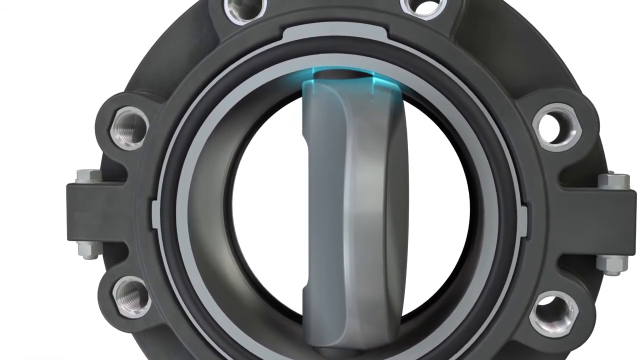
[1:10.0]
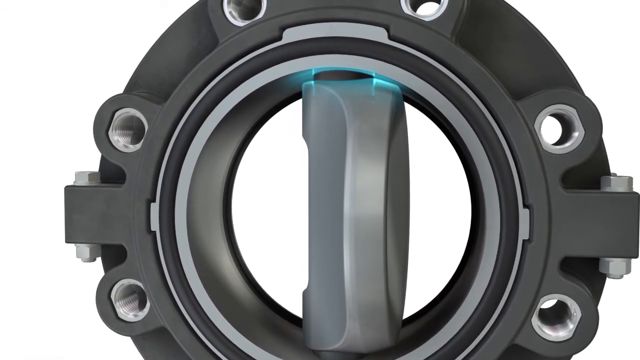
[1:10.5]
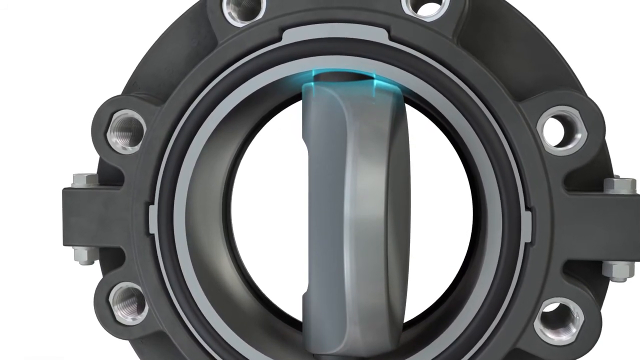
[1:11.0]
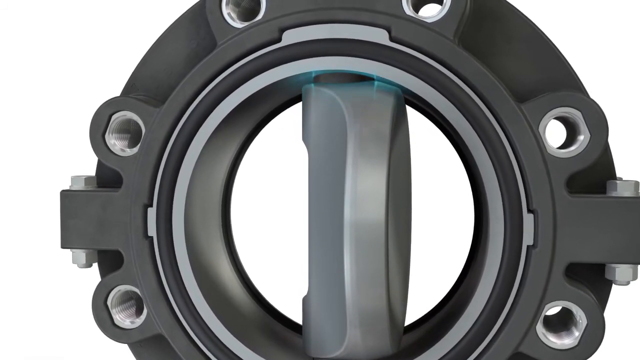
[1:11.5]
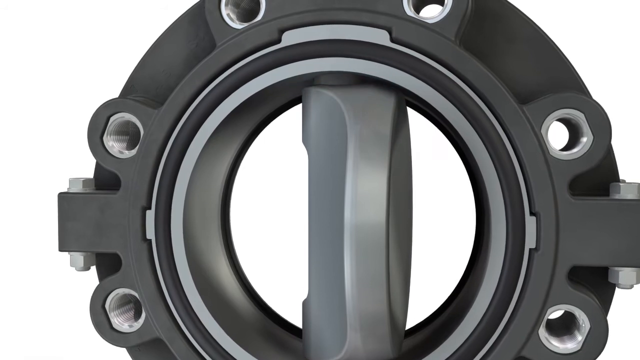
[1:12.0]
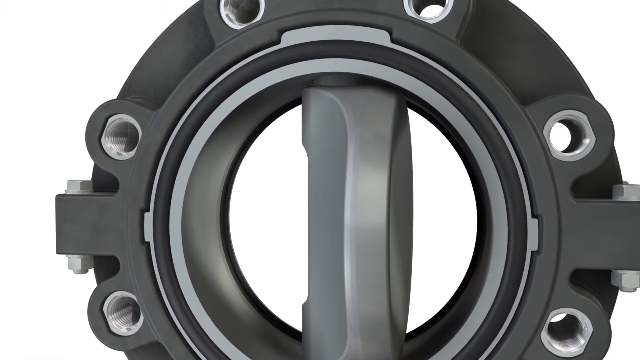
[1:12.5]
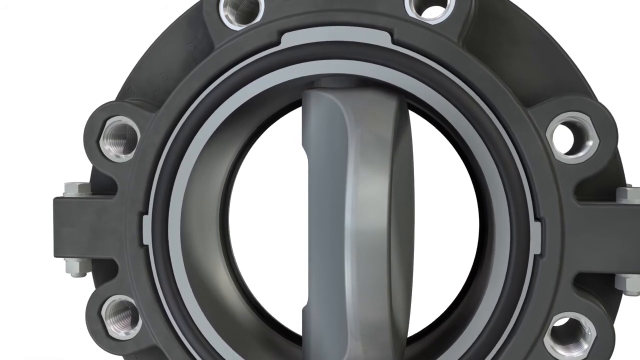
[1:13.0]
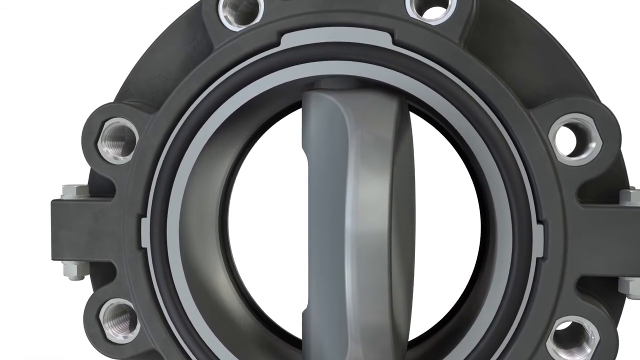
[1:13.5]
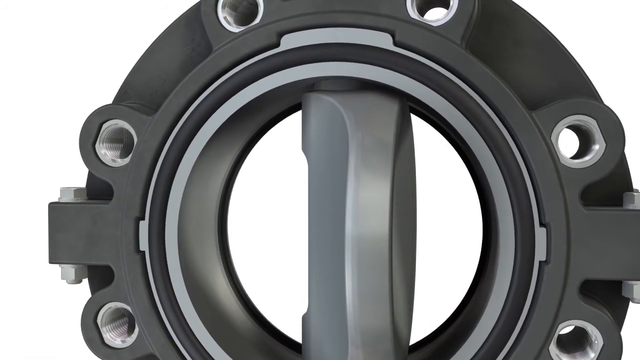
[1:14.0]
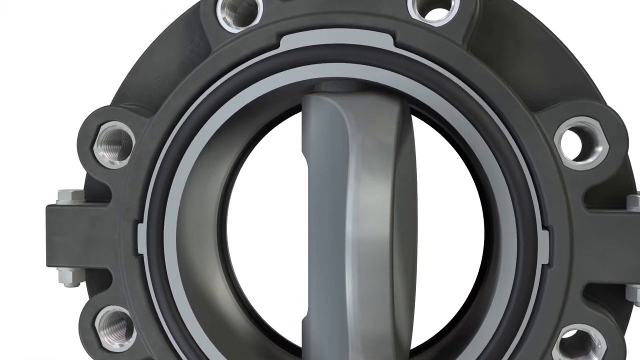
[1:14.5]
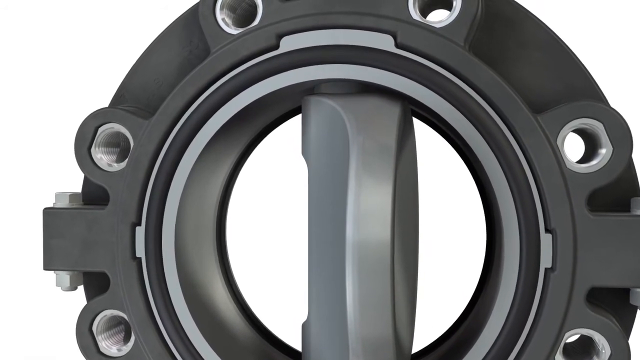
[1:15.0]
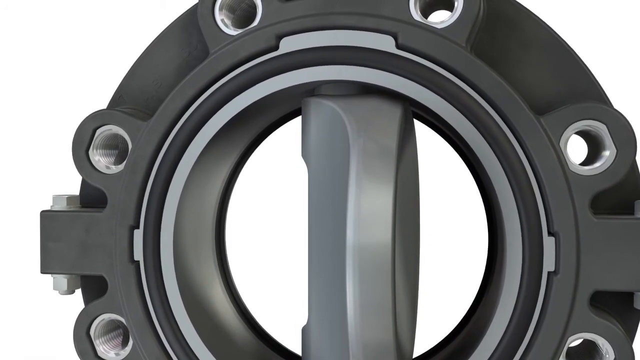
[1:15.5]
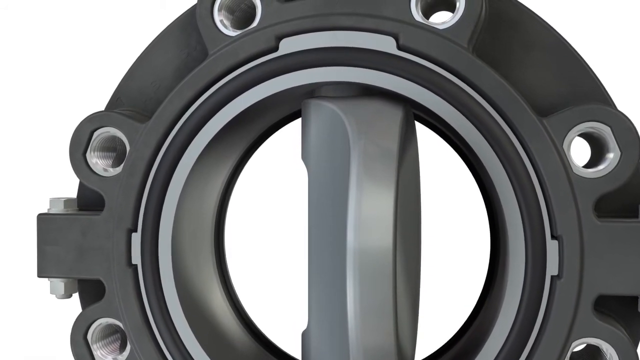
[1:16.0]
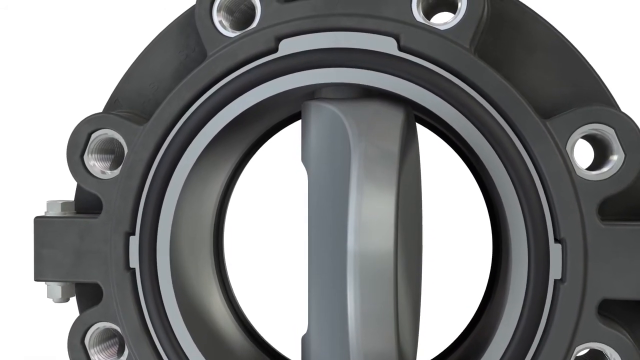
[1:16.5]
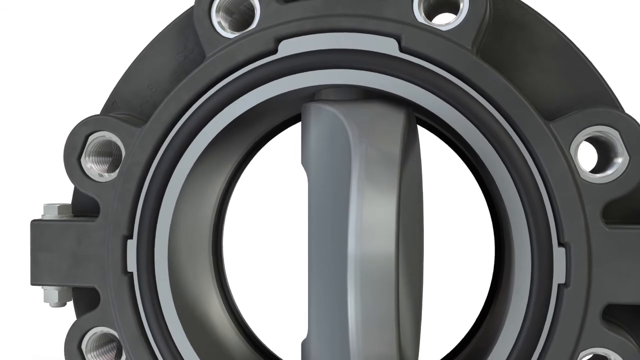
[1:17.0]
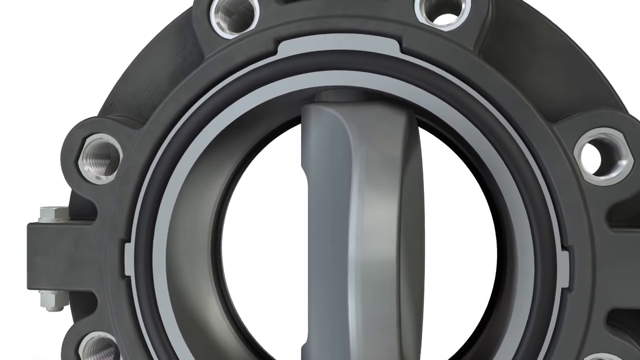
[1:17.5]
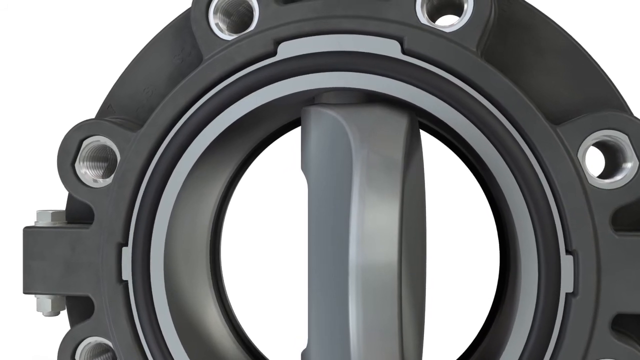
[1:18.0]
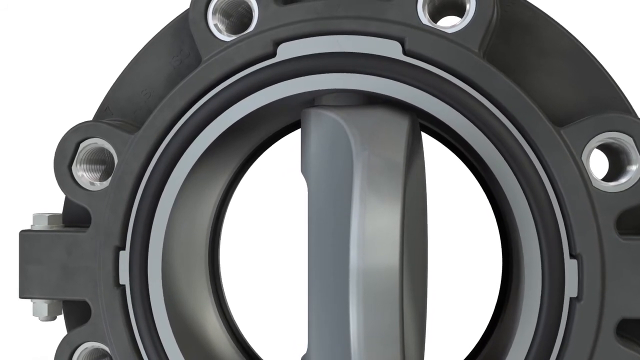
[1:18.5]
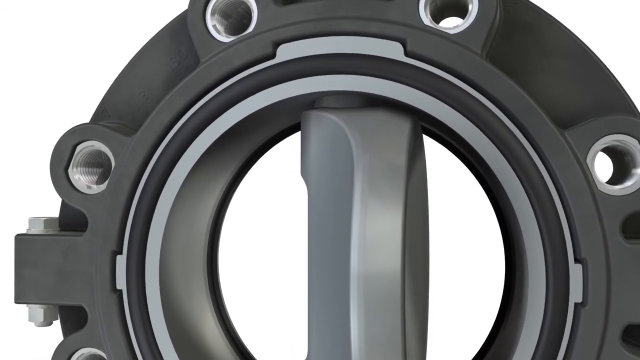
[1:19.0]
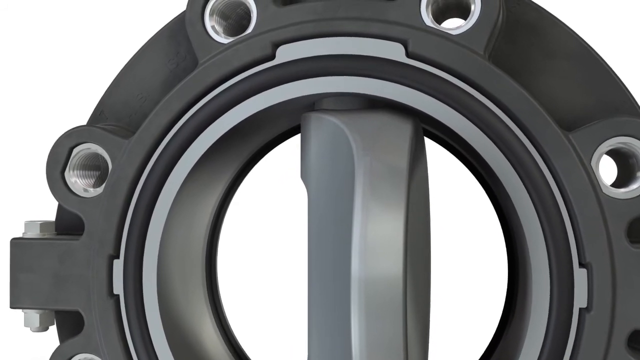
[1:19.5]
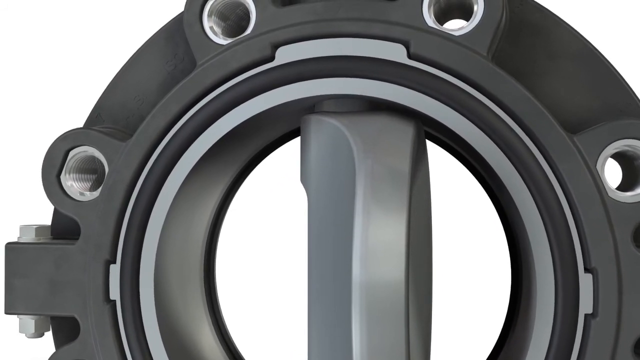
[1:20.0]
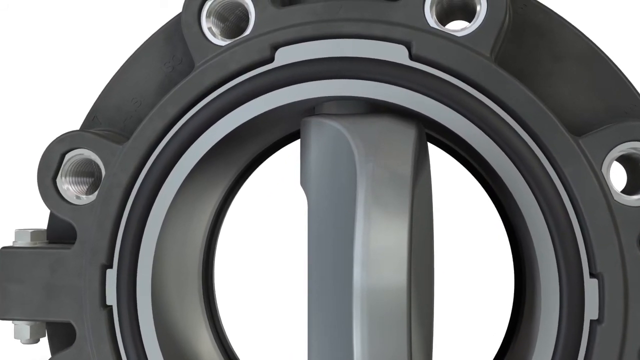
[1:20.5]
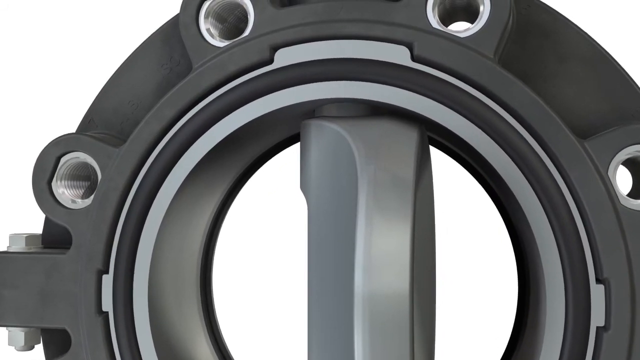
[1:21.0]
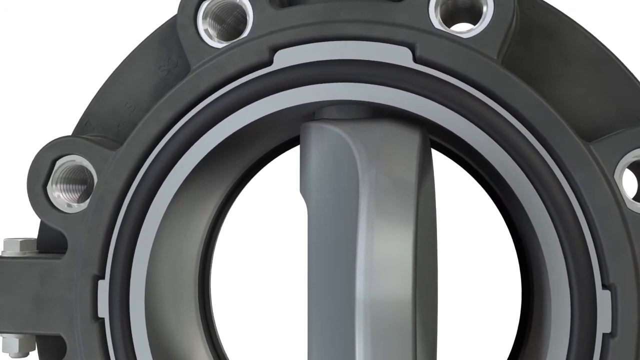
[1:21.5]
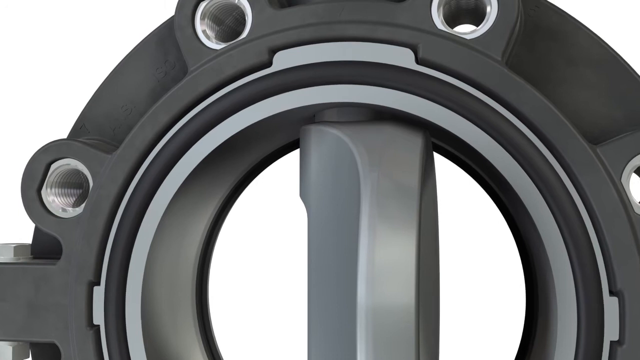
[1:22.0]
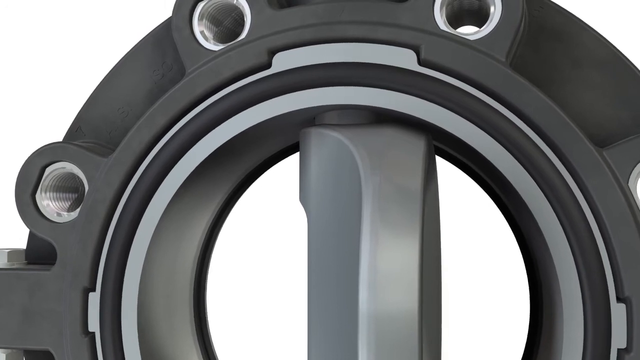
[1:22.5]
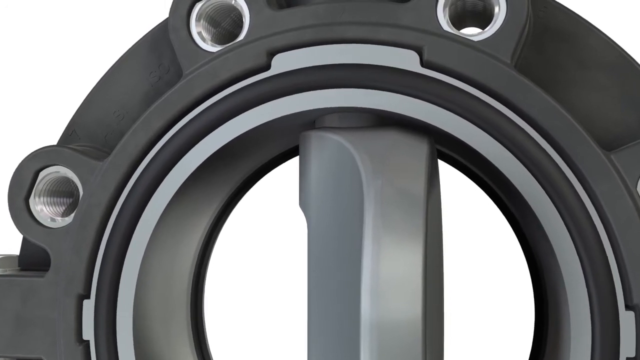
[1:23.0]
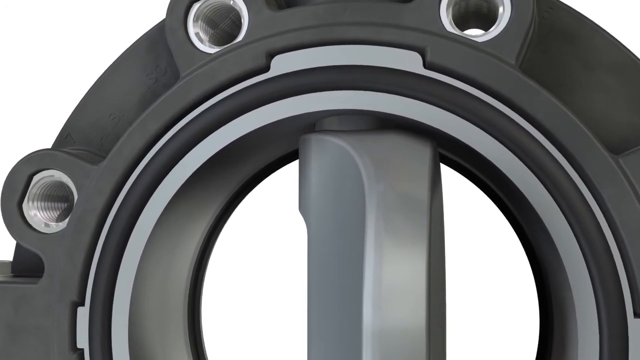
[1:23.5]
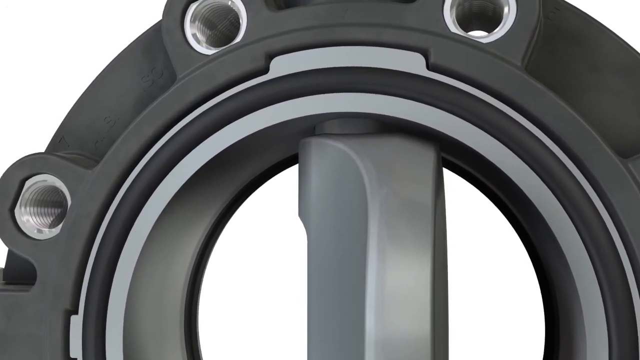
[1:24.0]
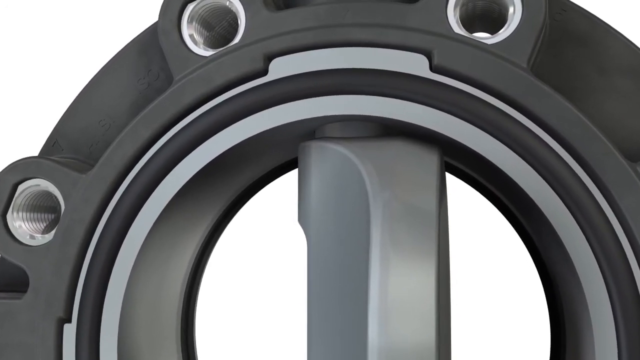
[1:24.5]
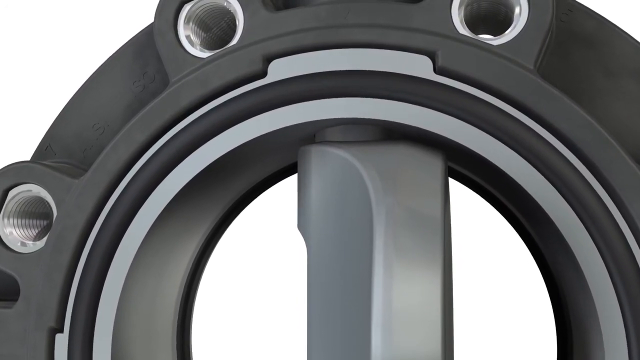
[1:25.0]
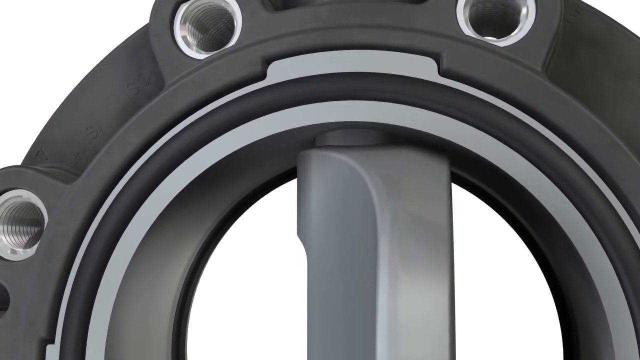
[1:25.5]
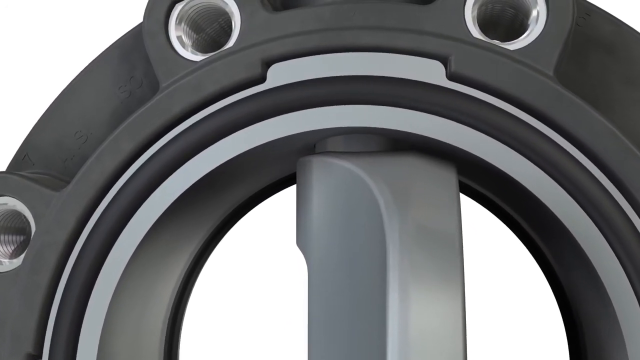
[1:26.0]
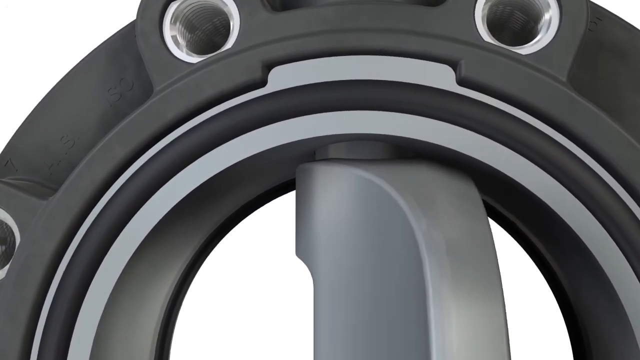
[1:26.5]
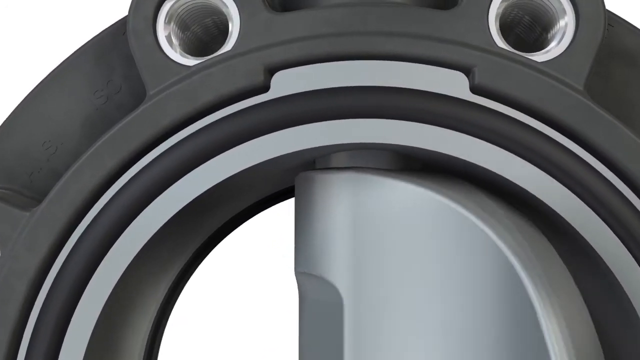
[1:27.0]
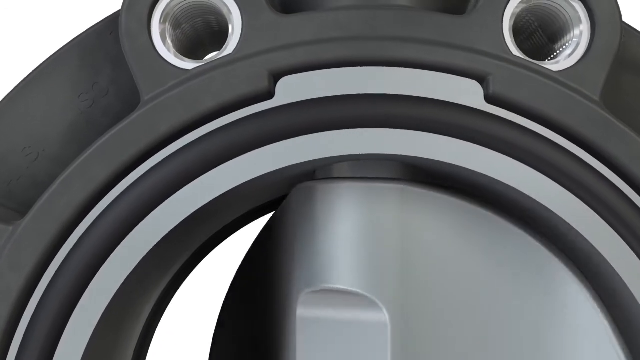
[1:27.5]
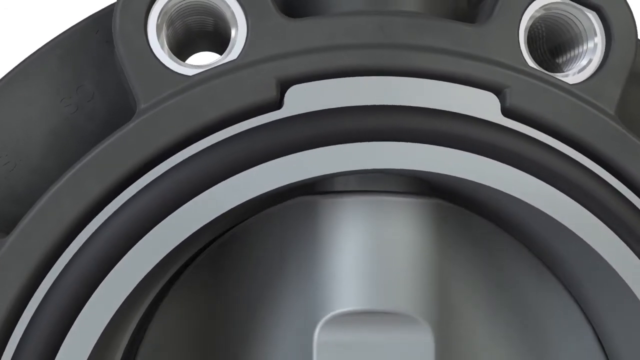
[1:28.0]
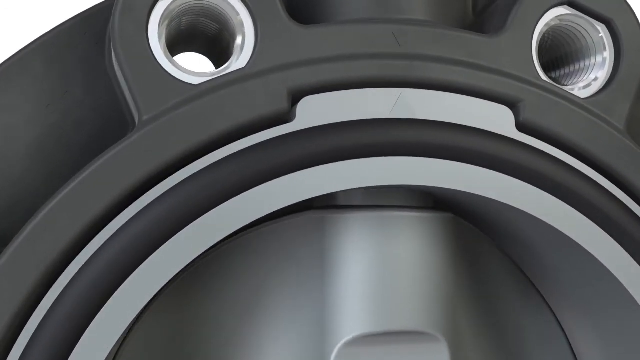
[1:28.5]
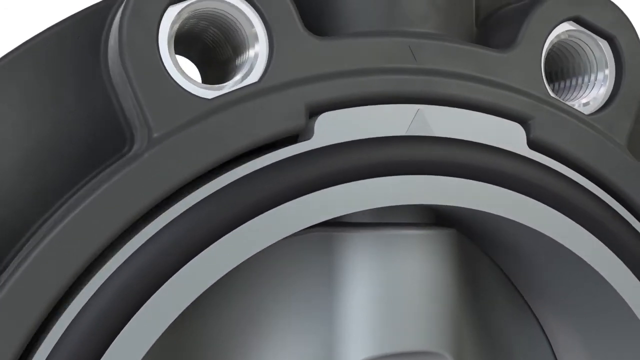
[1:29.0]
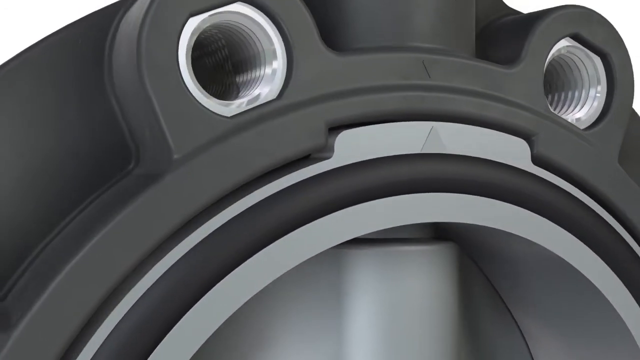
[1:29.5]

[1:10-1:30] The blue section at the top fades back to its normal colour. A piece connecting it to the main device is visible, and the camera very slowly zooms into it, showing that it looks all metal. The inner part is completely smooth, with no ridges on the inside of the circle, and the section that twisted to a vertical angle looks like it simply slides into the circular part. It then slides around so it is back to filling the circle, fitting the piece. The view zooms up into the section where the screws go, which has silver ridges; with no screws in it, the white background behind the device can be seen through it.